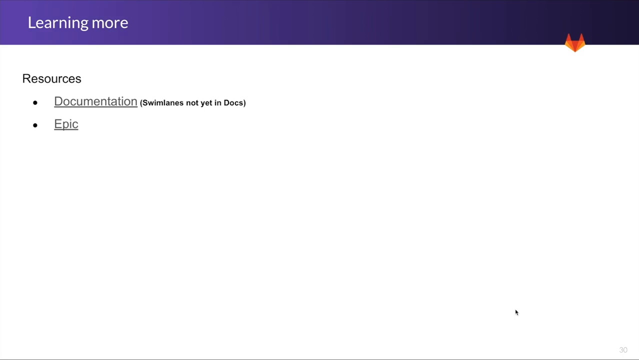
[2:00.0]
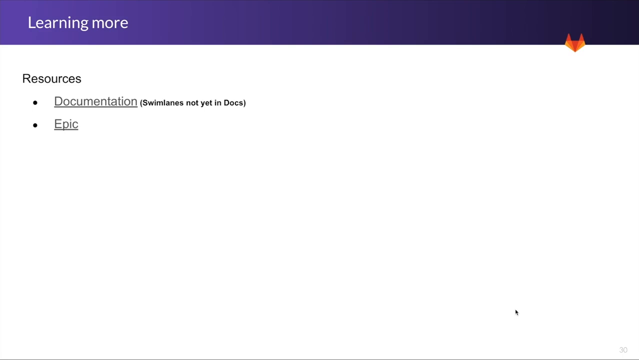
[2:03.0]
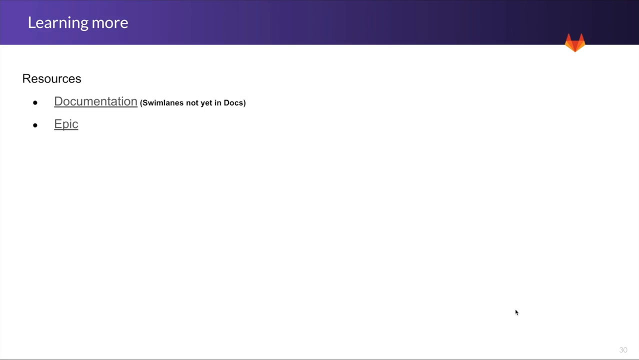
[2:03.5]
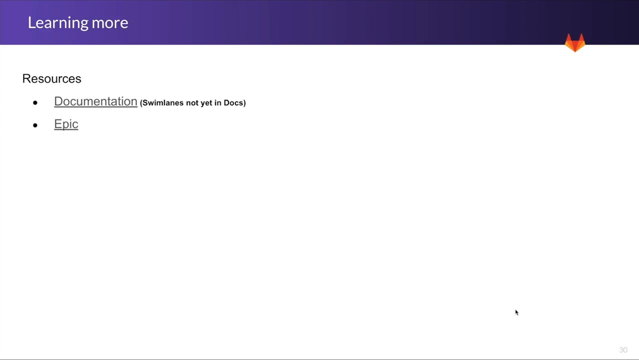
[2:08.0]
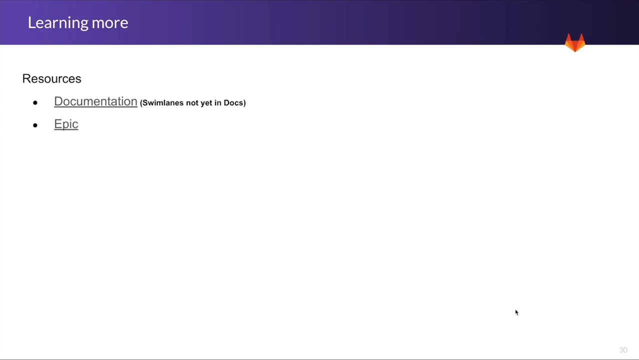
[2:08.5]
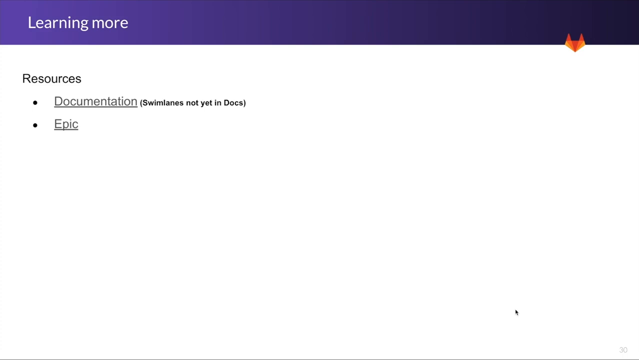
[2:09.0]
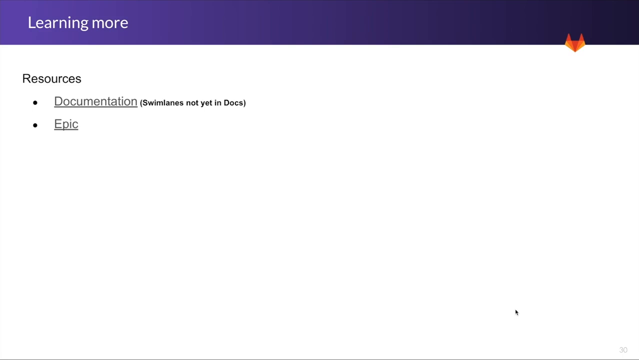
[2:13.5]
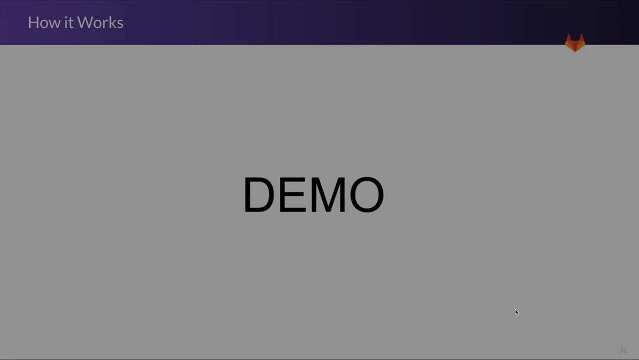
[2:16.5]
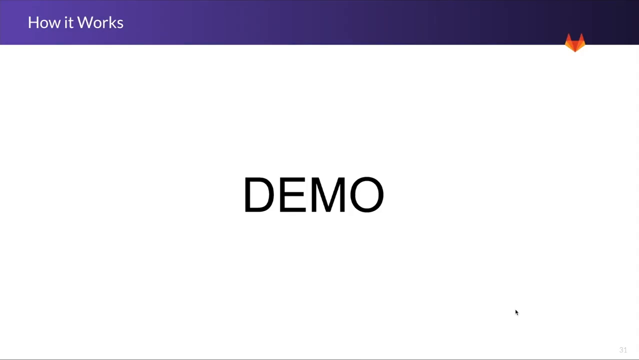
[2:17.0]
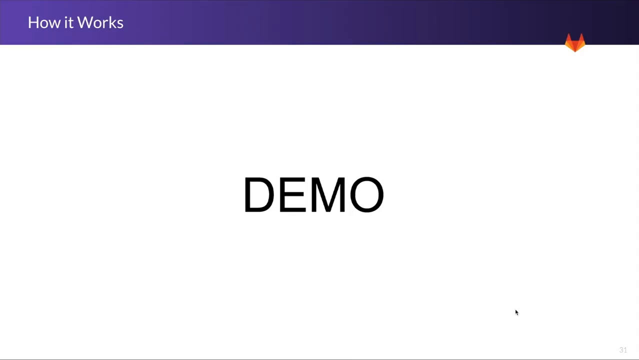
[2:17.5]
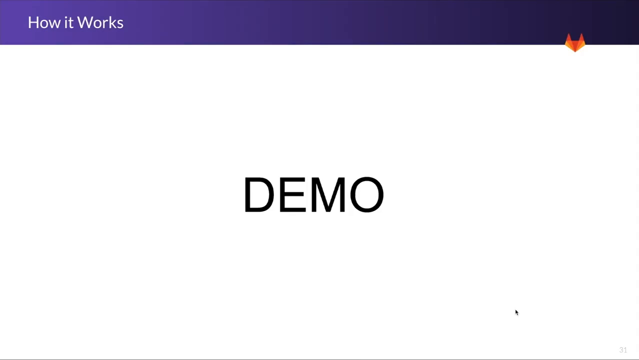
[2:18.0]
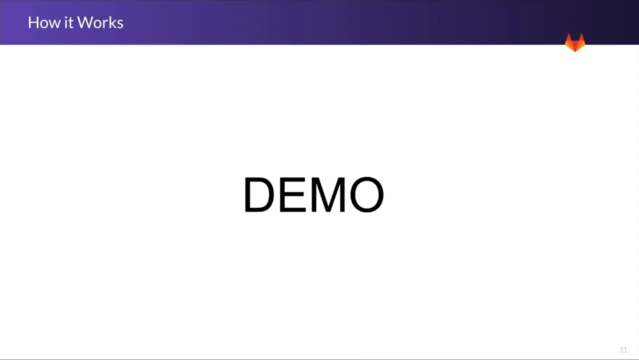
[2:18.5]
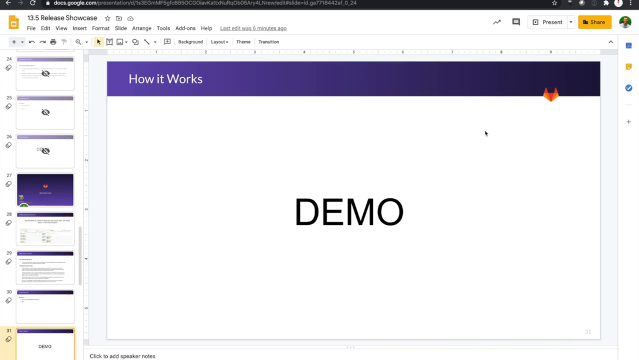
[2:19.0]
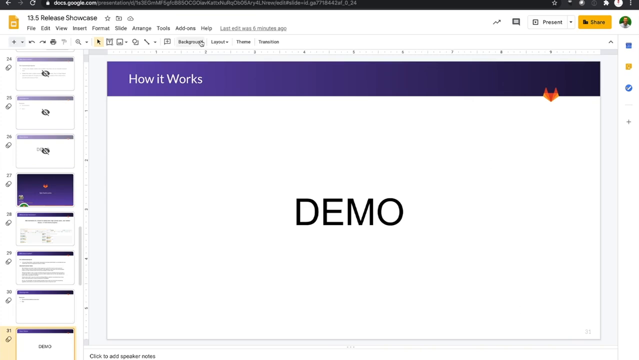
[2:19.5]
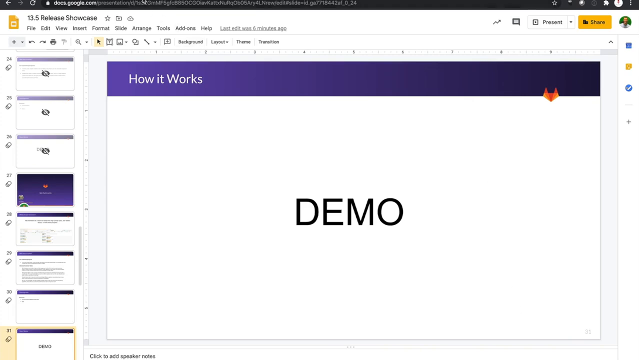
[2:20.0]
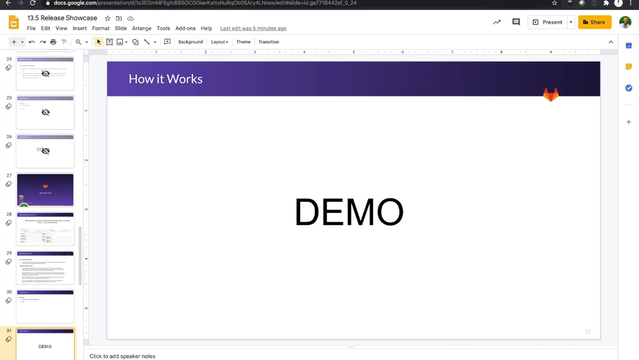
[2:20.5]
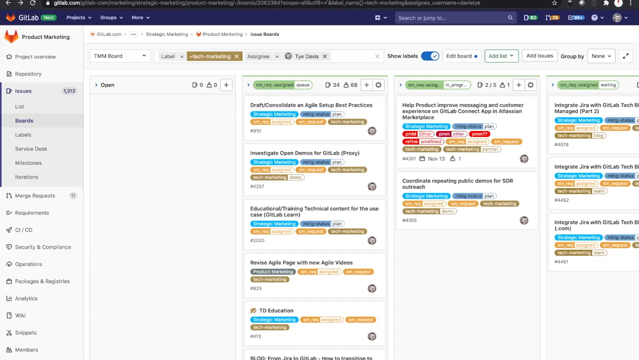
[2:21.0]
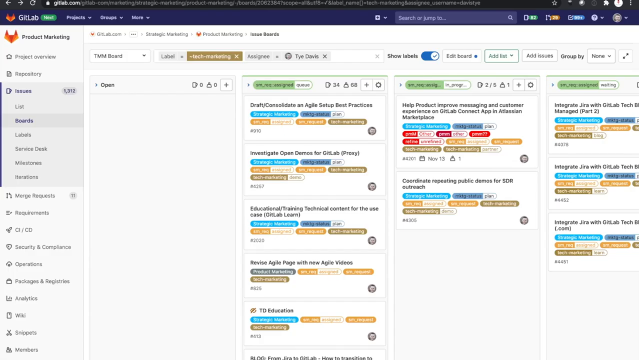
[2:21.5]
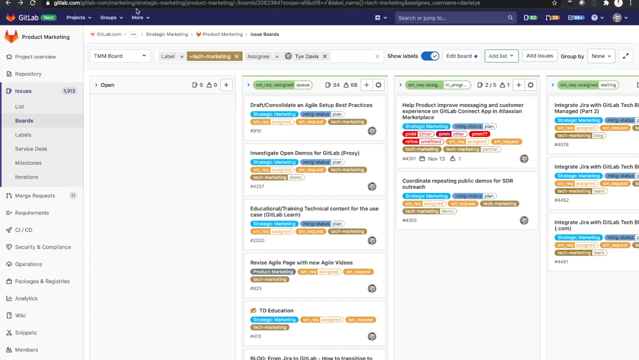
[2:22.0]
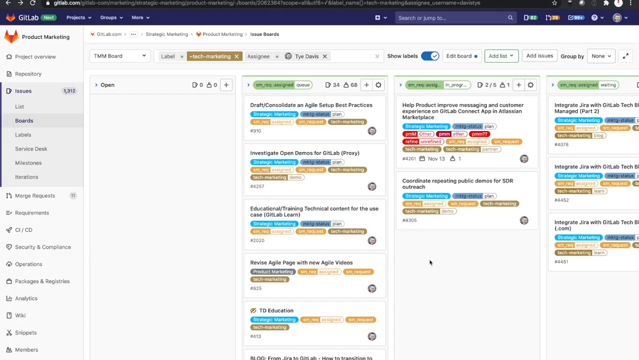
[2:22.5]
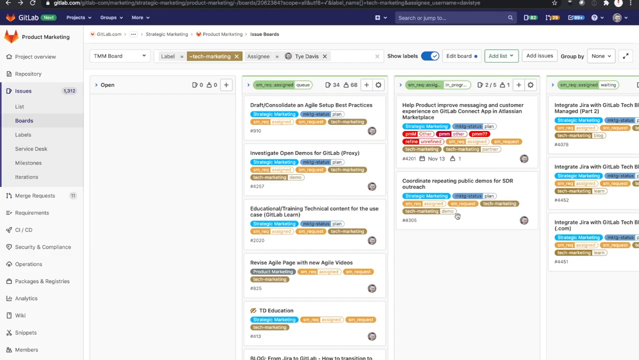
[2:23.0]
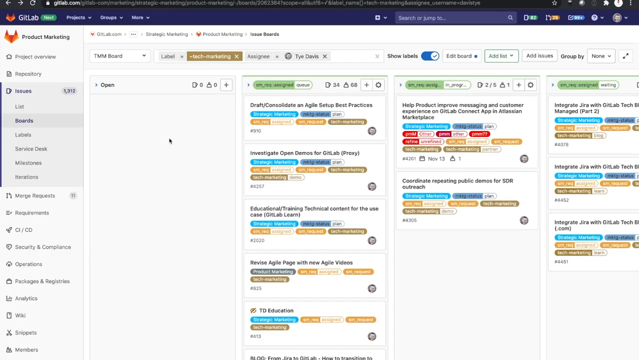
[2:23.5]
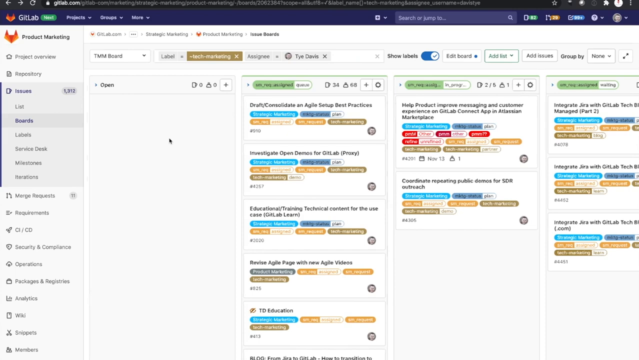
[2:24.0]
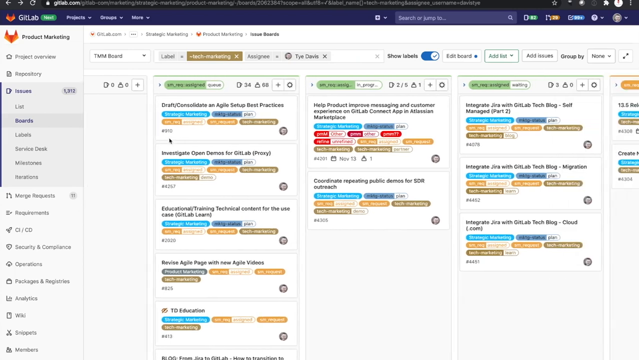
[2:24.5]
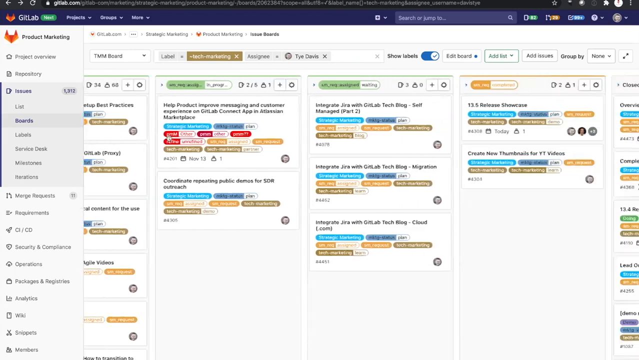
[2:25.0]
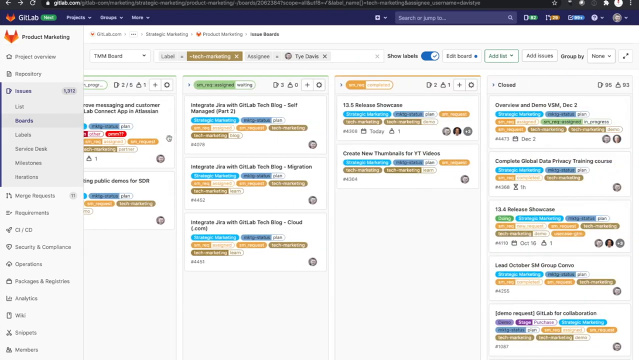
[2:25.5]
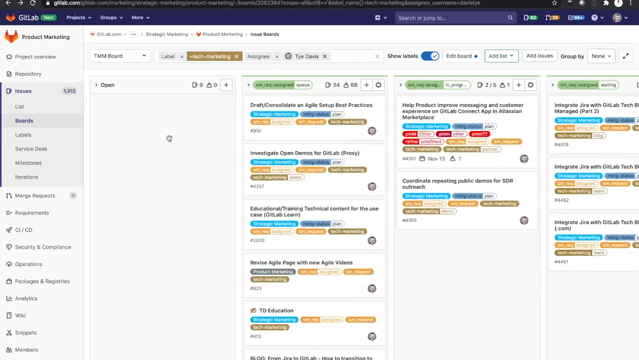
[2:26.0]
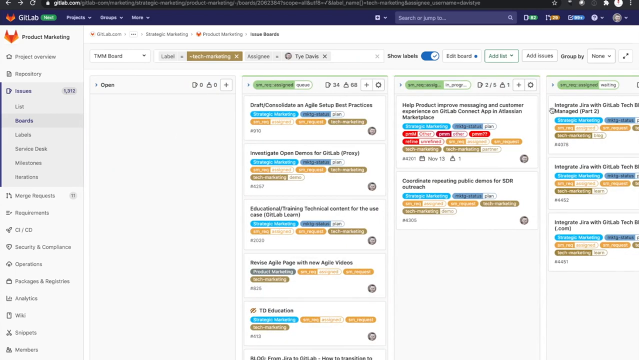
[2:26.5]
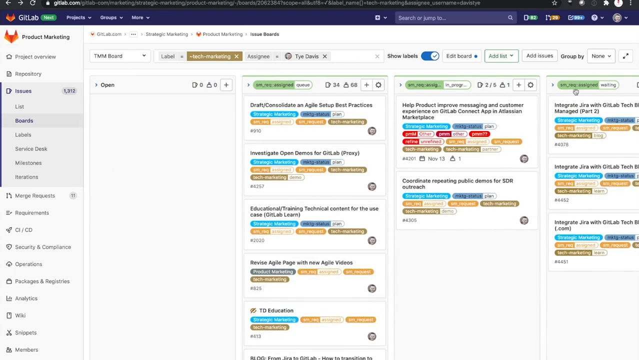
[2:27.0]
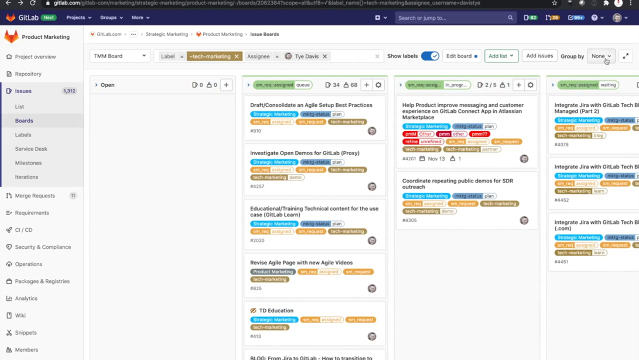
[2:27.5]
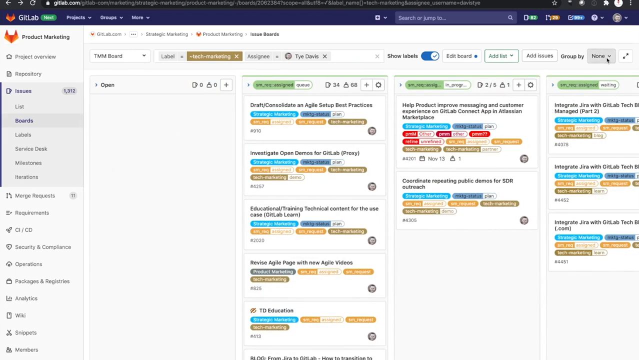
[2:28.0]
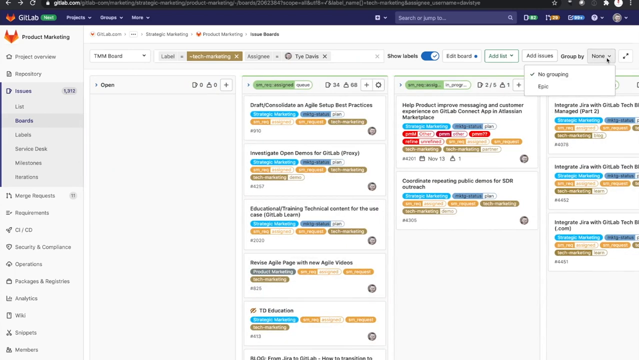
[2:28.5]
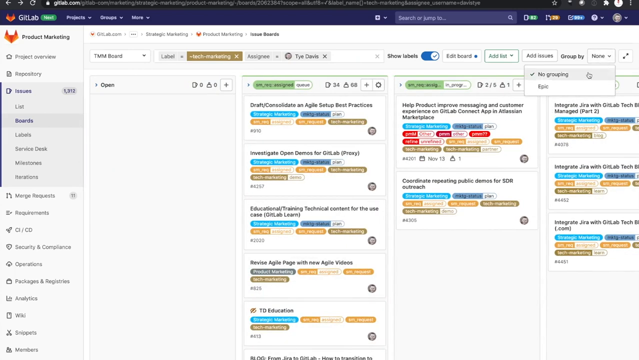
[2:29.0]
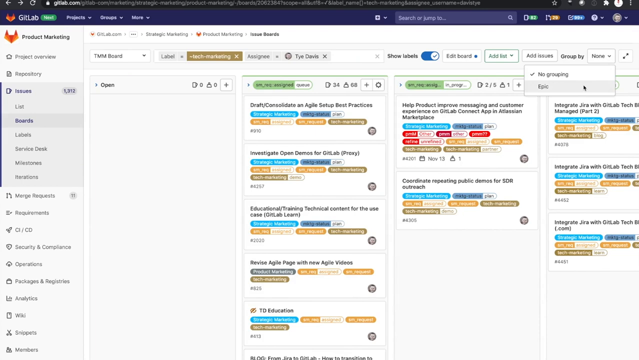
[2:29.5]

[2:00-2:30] Two bullet points appear under a resources section, including a documentation map with a parenthesis reading "swimlanes, not yet in Docs". At the very top of the screen is a "learning more" chyron with white text over a purple background. A large demo button reads "DEMO" in all capital letters. The person then goes to the GitLab software, which shows many options with many different colors over the text, giving a colorful, rainbow-like look. The person then returns to the learning more section and shows the resources under the documentation.